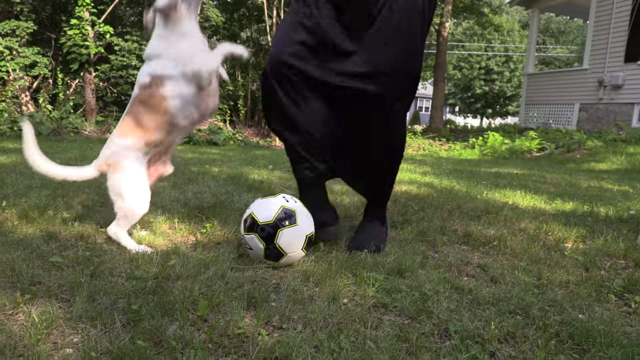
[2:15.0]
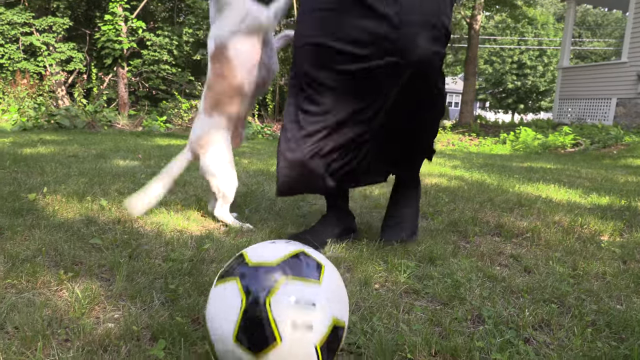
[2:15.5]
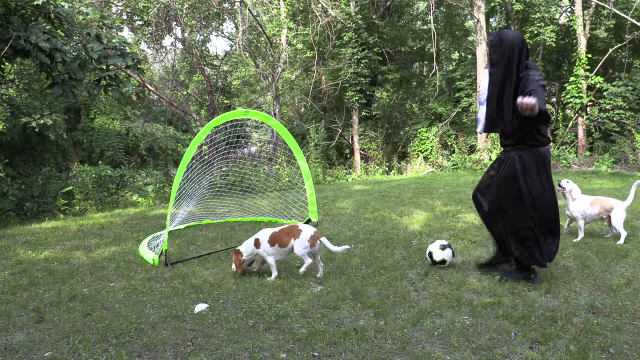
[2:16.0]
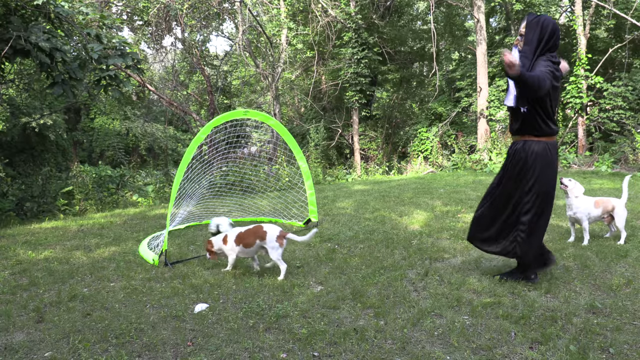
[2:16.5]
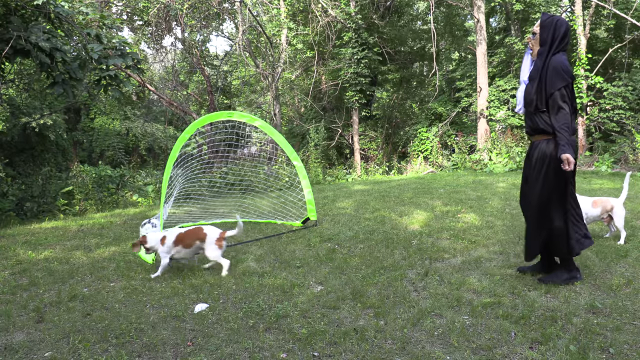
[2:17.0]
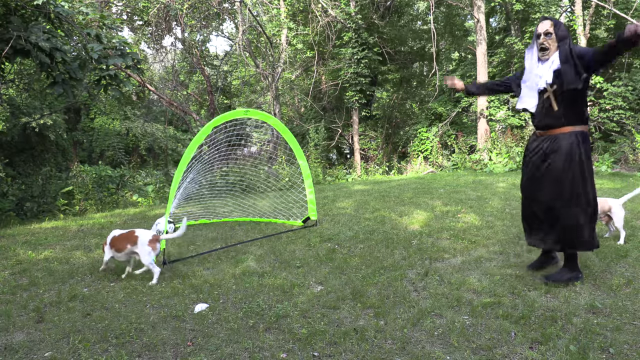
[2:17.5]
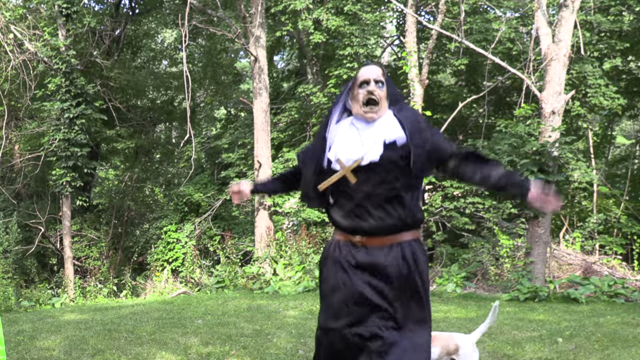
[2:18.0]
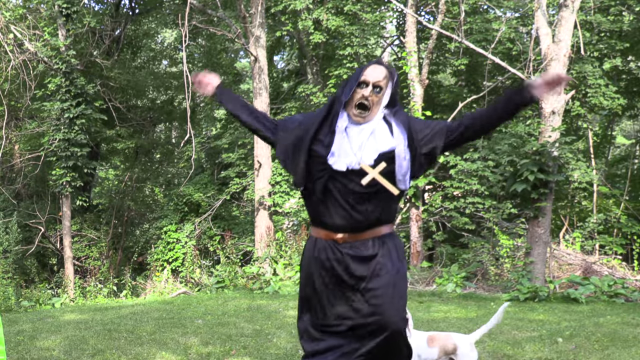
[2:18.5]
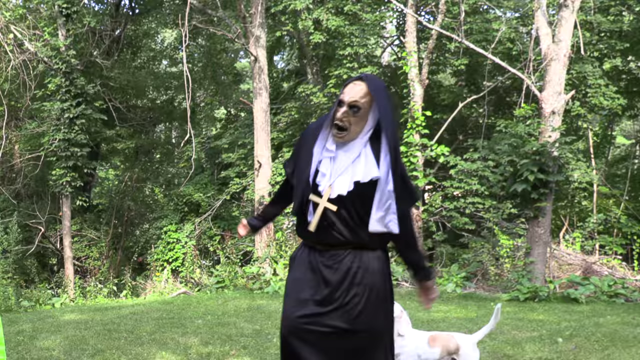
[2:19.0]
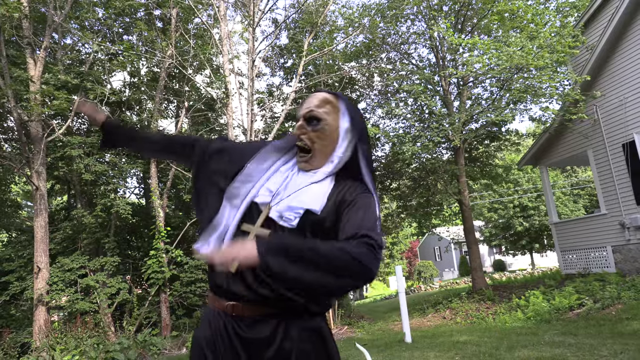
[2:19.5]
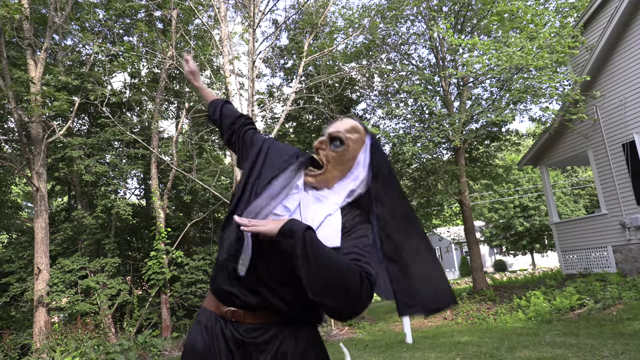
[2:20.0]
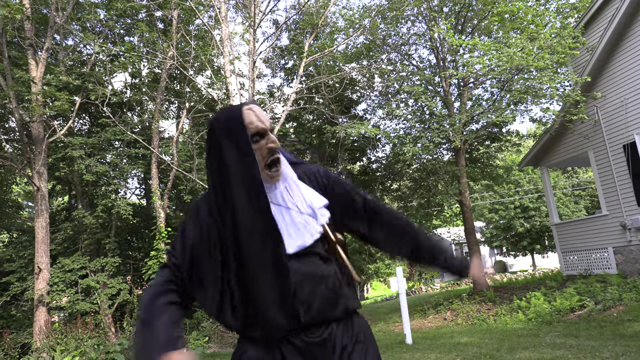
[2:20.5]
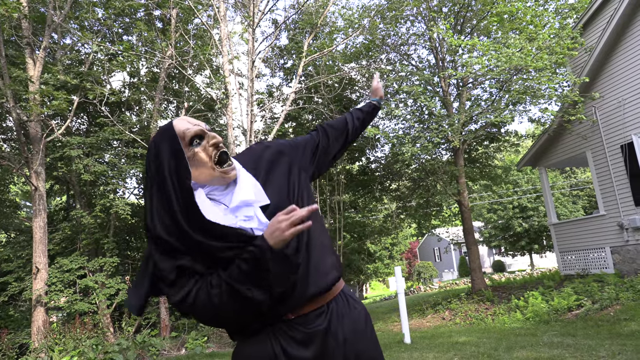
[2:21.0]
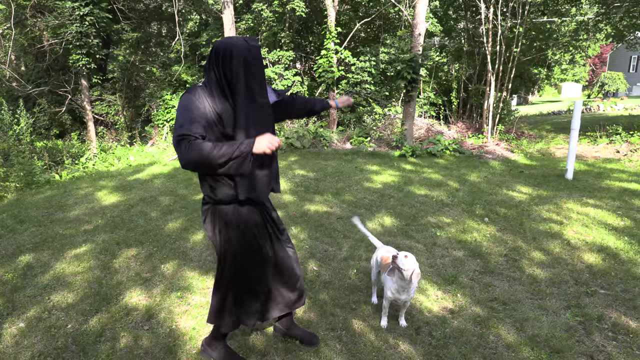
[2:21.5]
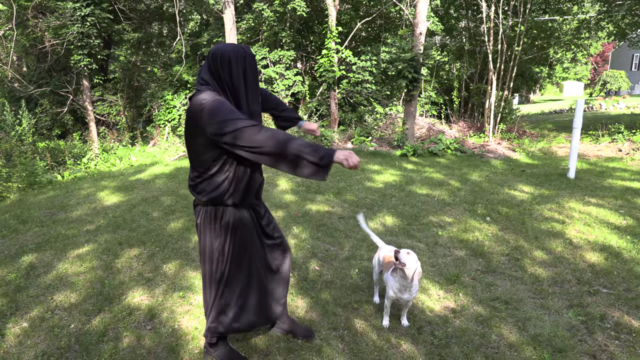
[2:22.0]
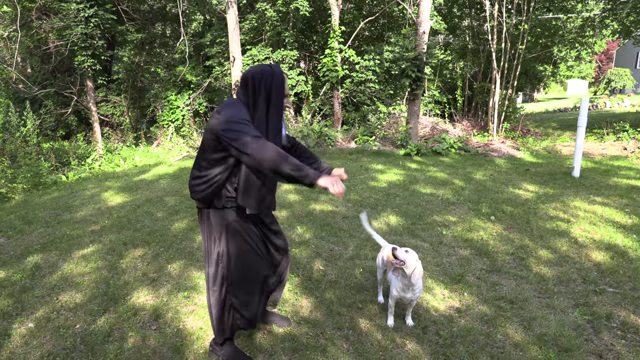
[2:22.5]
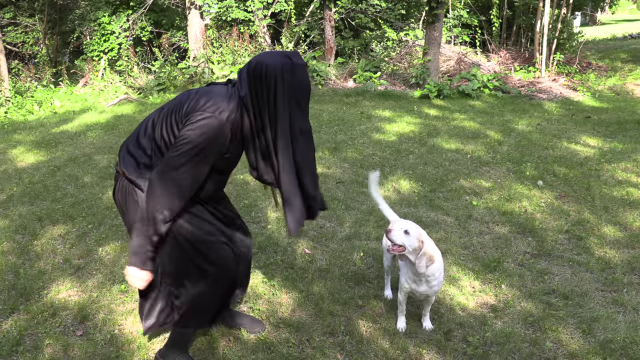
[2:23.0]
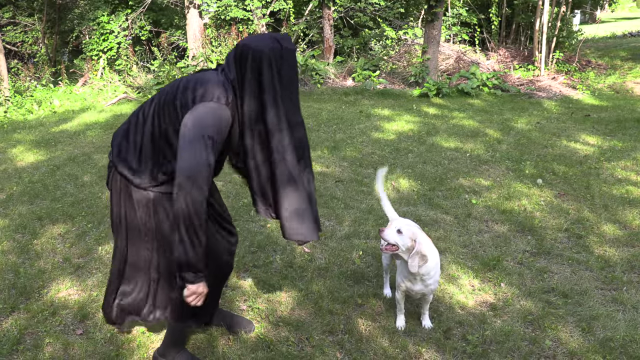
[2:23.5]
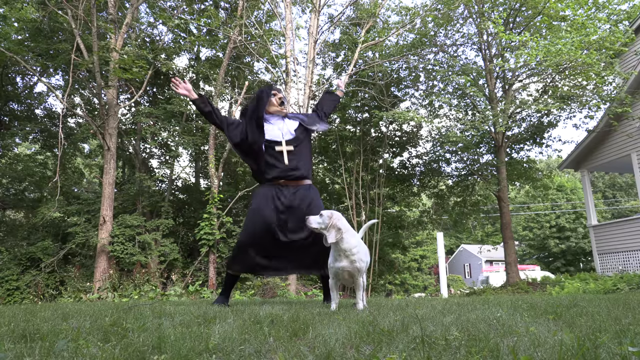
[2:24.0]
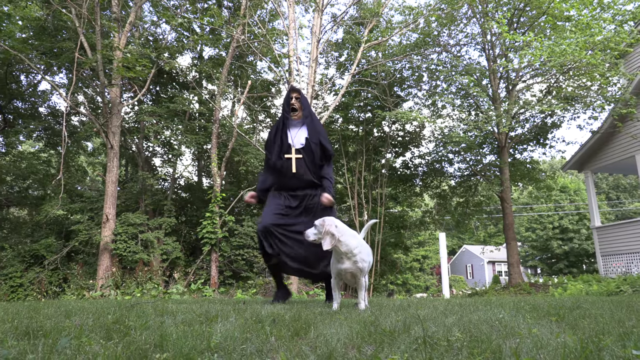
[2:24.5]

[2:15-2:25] A close-up shows the black and white soccer ball being kicked by the demon nun, with the dogs running around and playing with him. The demon nun kicks the ball into the goalie net and the dog follows it. The nun dances around excitedly with the dog; the dog is relatively unfazed, but the nun is clearly very happy that he got it in the net. The grass and trees are very green, and some cars pass by in the distance in what looks to be a suburban or maybe mildly rural area.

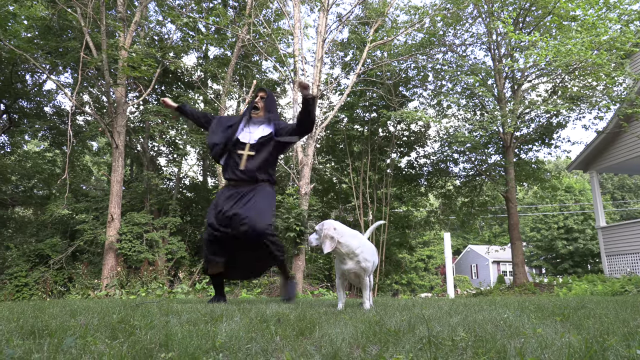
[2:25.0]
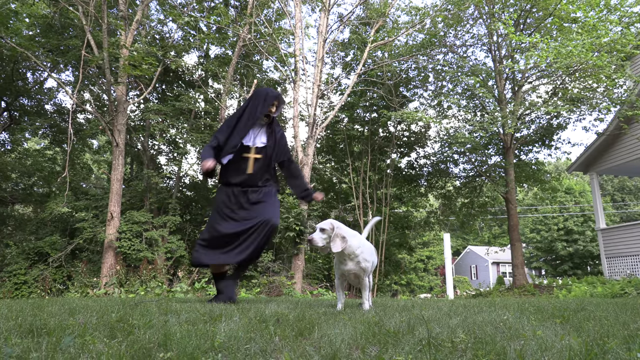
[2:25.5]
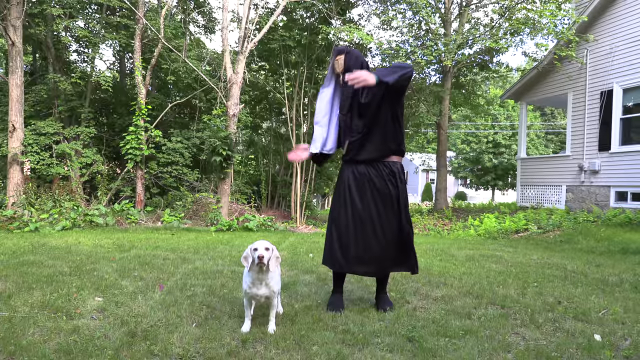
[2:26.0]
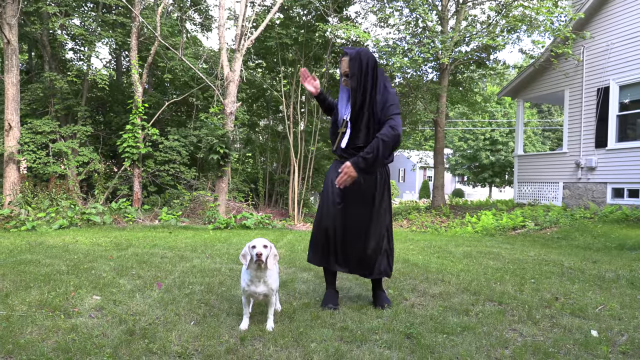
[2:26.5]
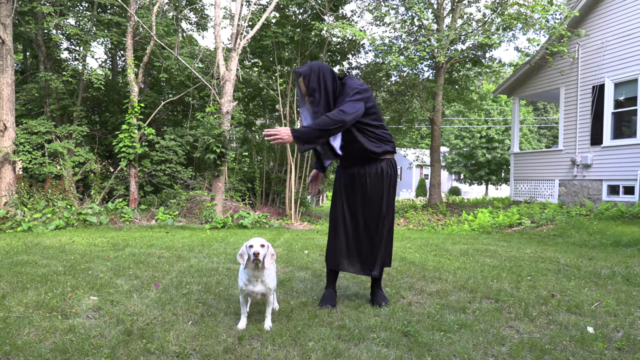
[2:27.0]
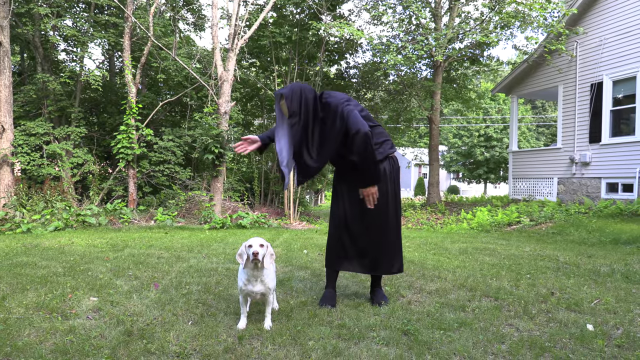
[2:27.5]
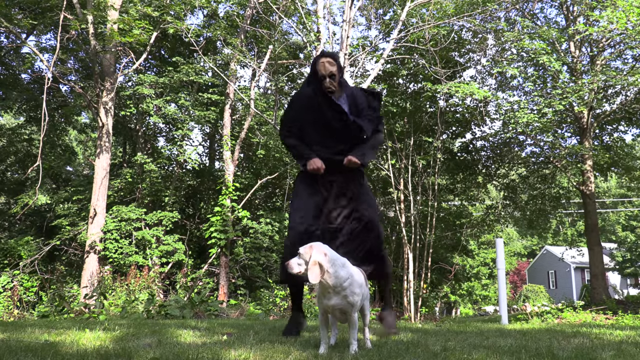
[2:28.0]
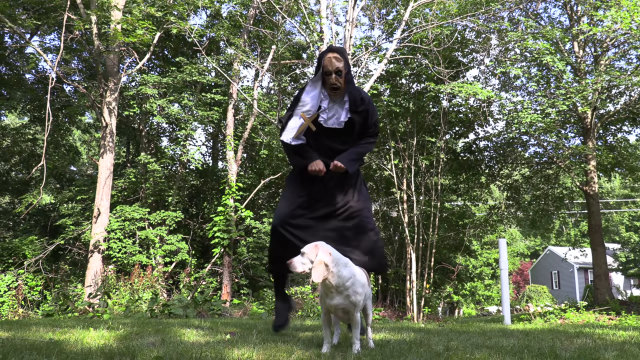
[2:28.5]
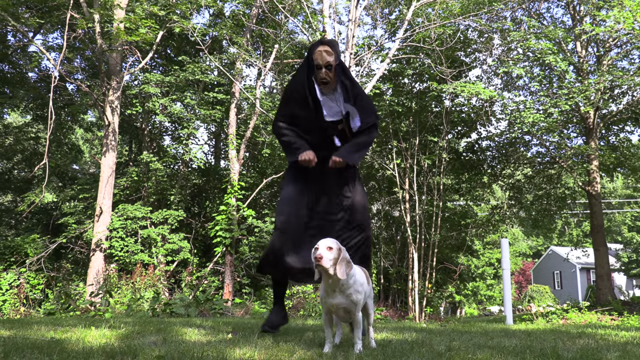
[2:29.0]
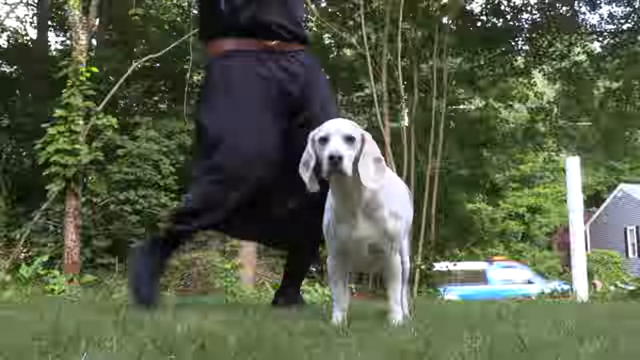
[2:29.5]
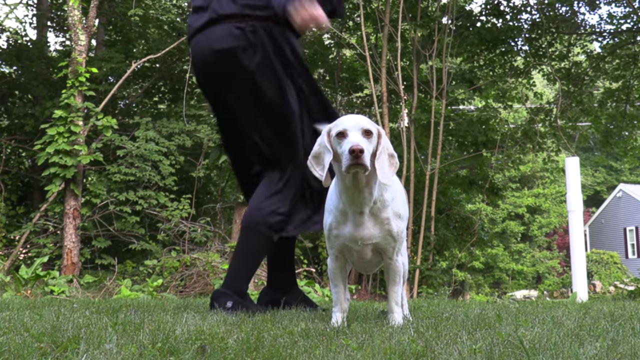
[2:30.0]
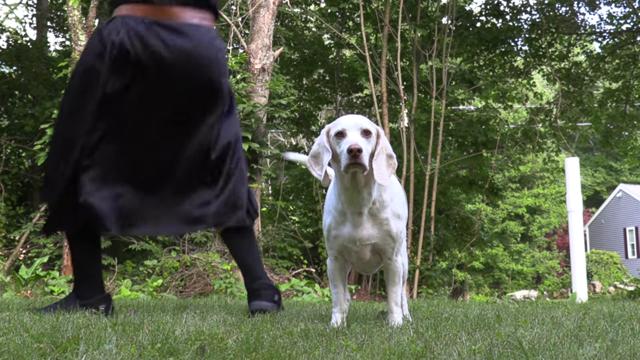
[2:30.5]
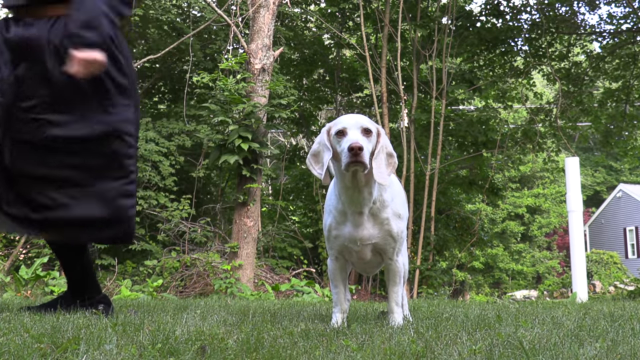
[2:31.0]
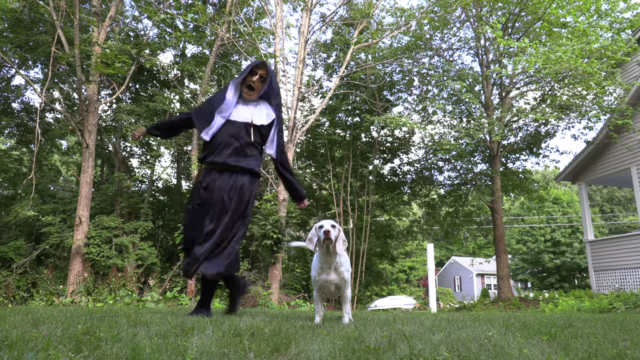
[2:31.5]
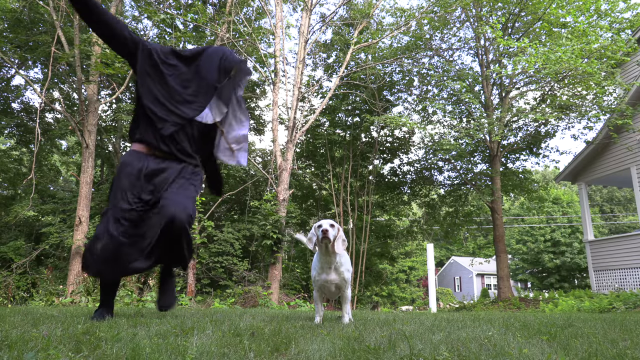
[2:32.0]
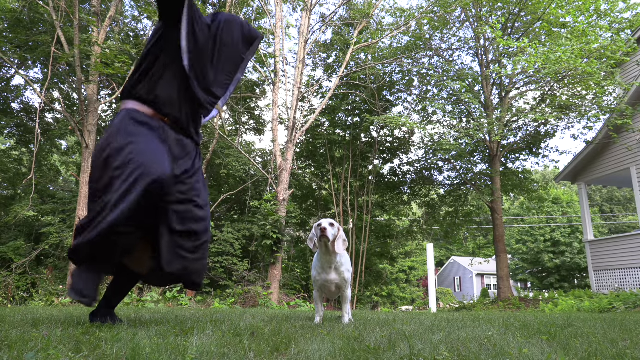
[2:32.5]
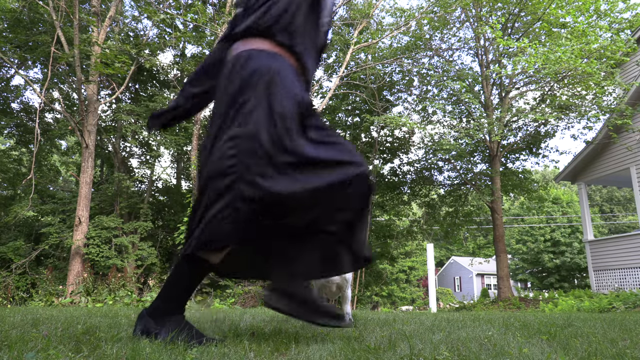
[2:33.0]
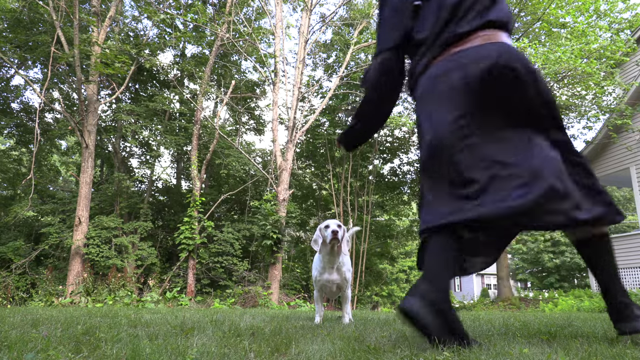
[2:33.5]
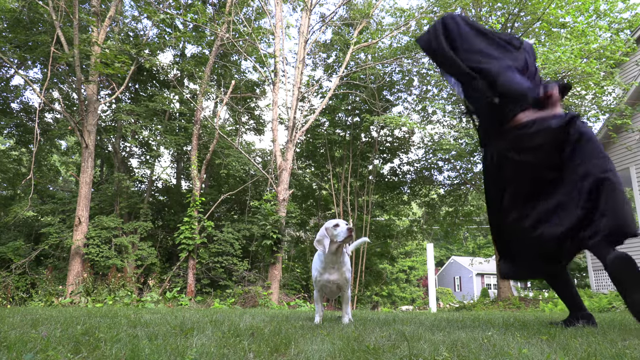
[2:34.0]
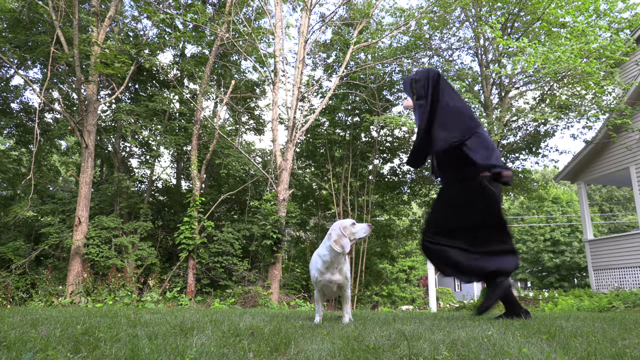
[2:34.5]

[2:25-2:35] The demon nun continues to dance in the backyard full of greenery. The dog with white ears stands quite still as the demon nun does a variety of dances, such as the robot, pumping his fists toward his thighs and moving his legs, spinning around and prancing around the dog in a circular motion. The dog stays quite still and looks around, especially at the camera. The demon nun's disconcerting appearance has grown less creepy. He keeps dancing and skipping around the white dog.